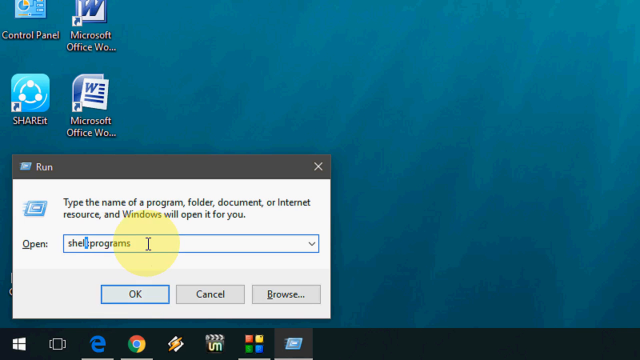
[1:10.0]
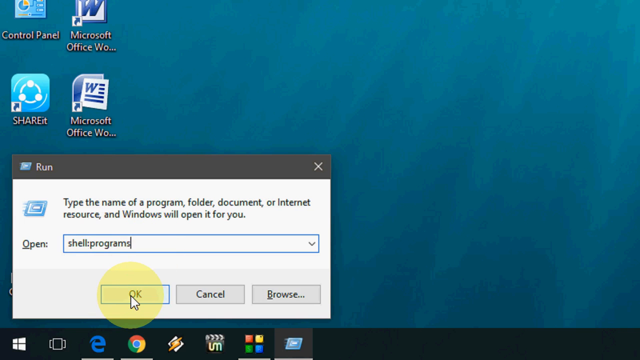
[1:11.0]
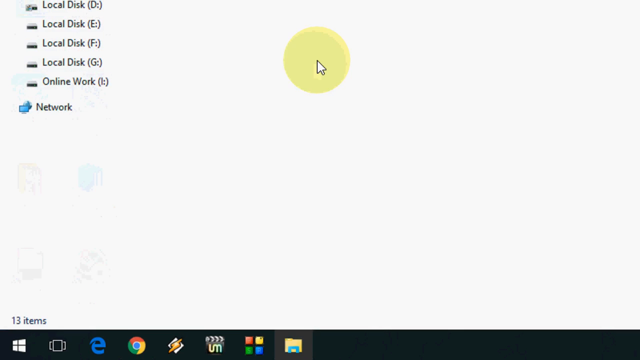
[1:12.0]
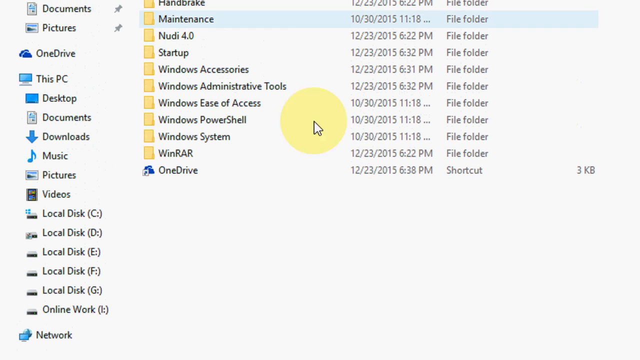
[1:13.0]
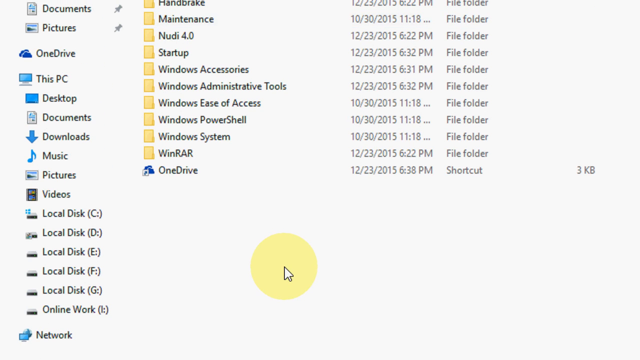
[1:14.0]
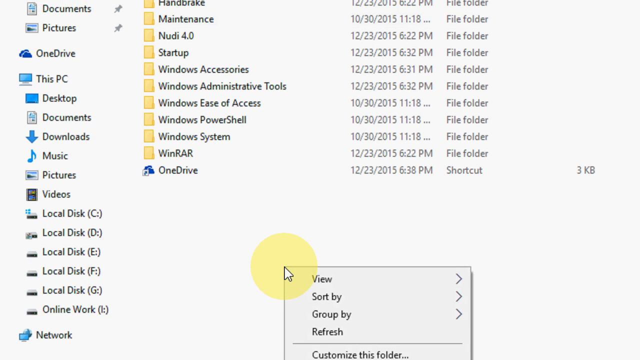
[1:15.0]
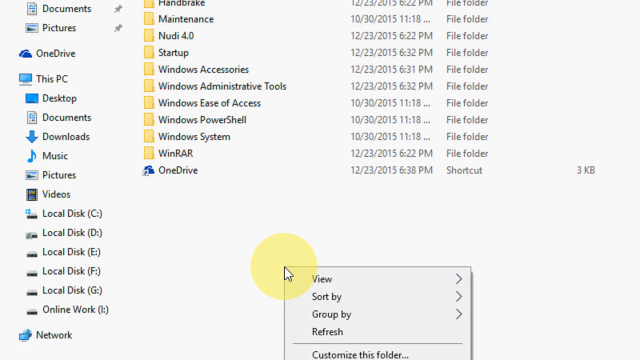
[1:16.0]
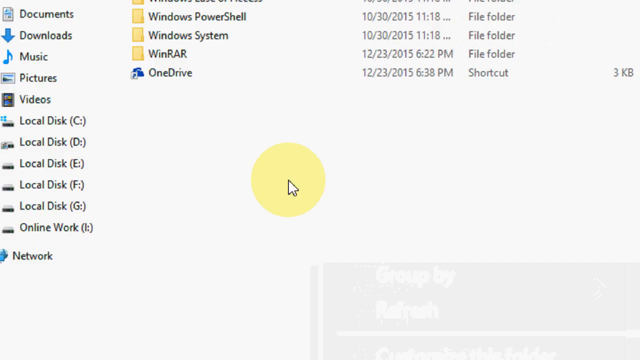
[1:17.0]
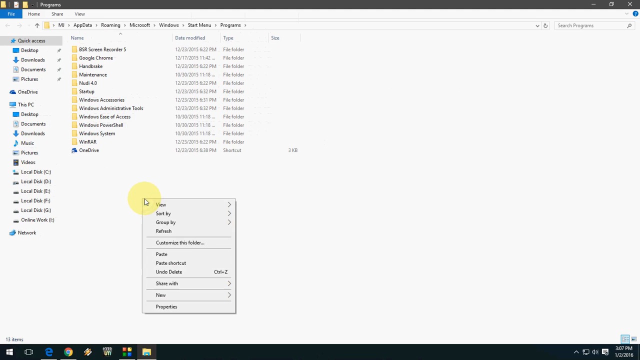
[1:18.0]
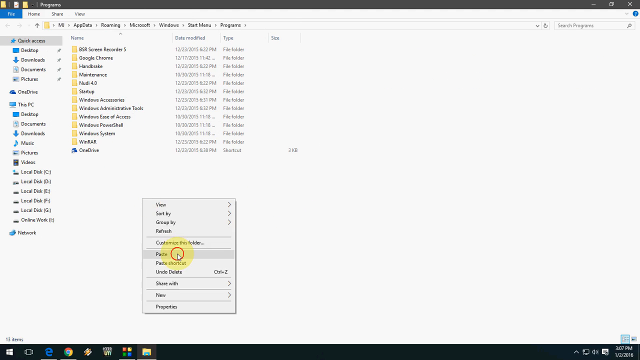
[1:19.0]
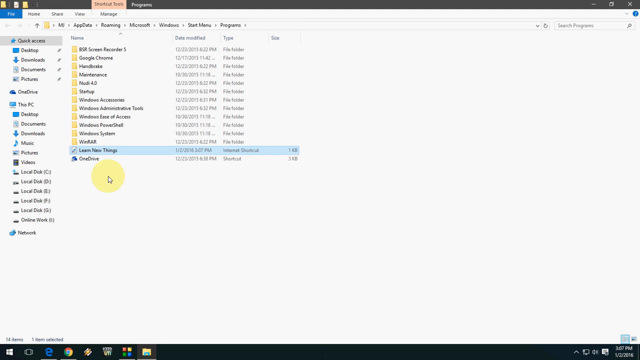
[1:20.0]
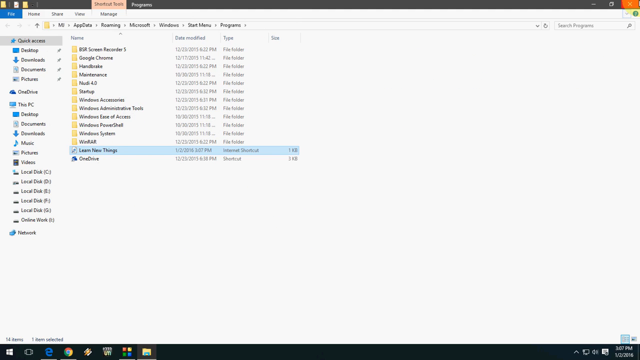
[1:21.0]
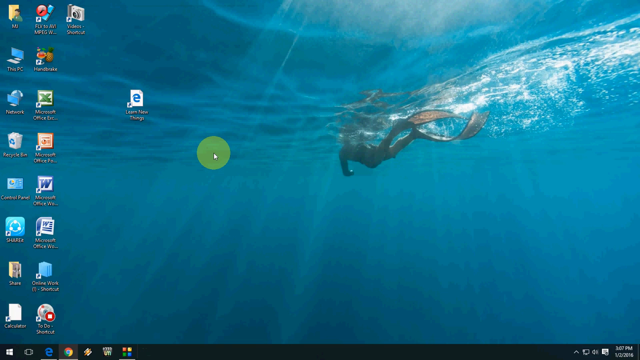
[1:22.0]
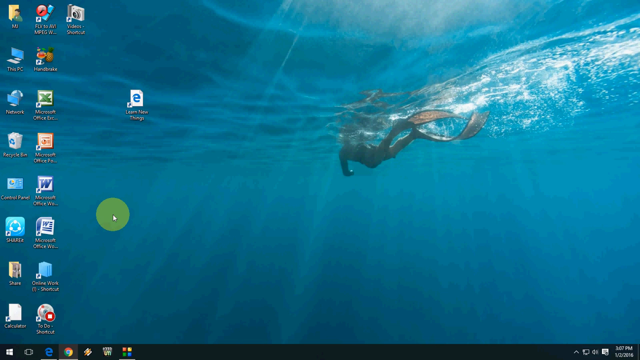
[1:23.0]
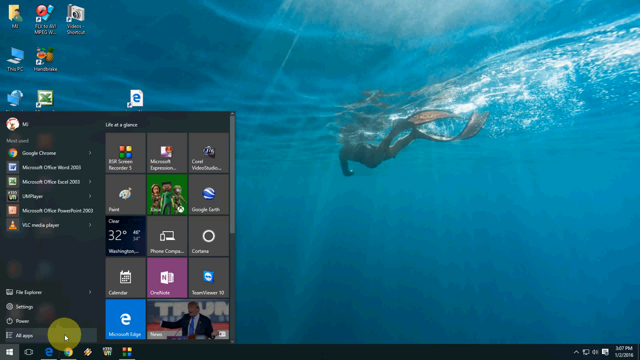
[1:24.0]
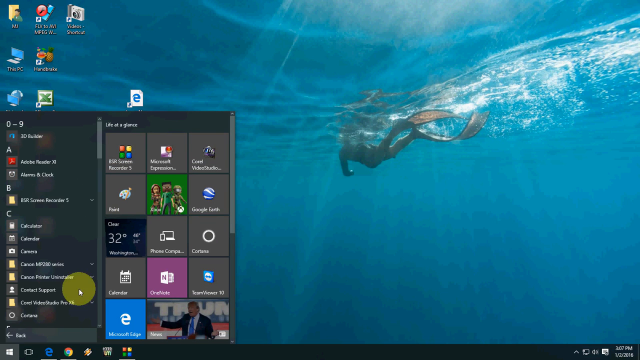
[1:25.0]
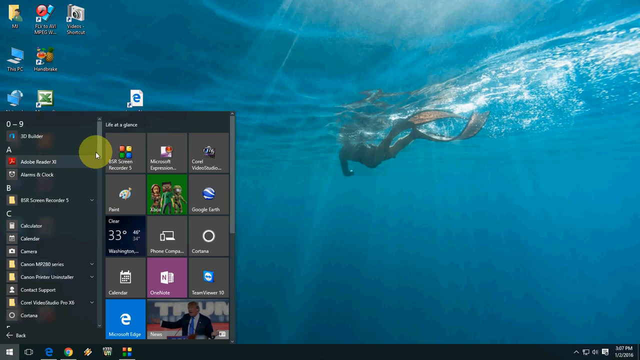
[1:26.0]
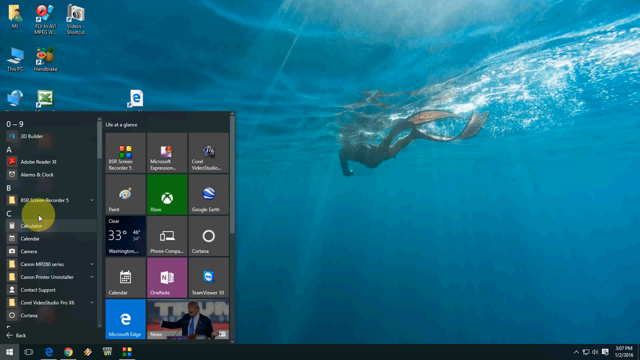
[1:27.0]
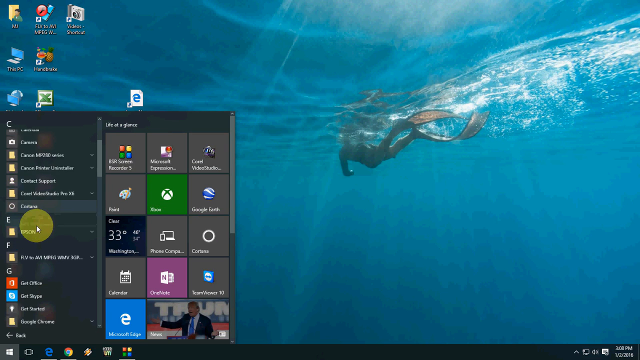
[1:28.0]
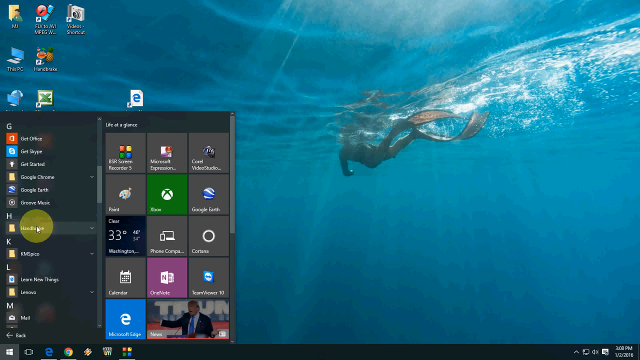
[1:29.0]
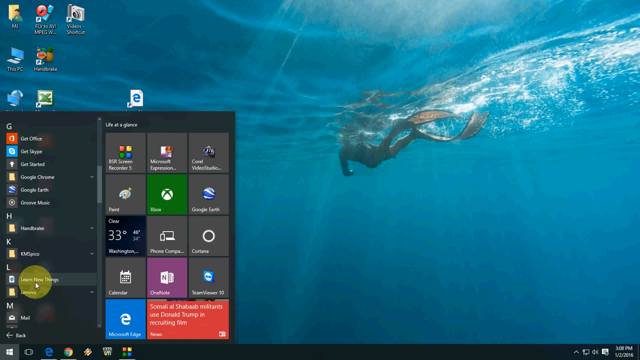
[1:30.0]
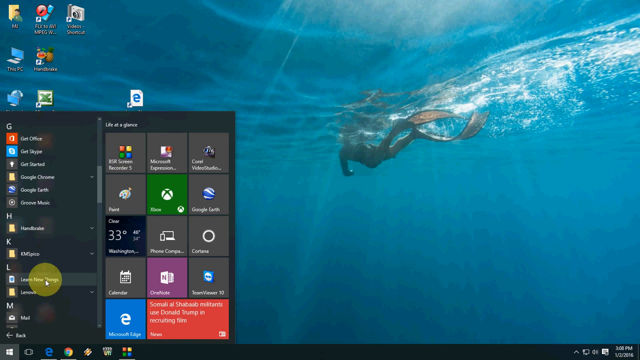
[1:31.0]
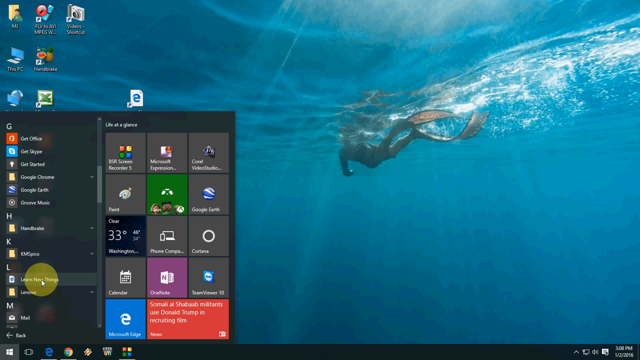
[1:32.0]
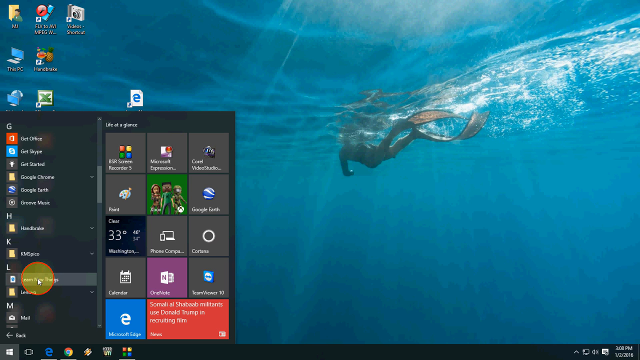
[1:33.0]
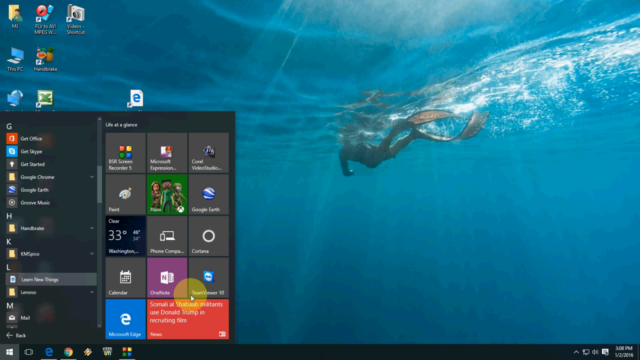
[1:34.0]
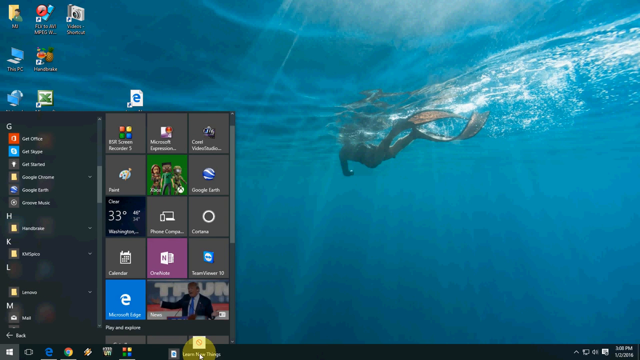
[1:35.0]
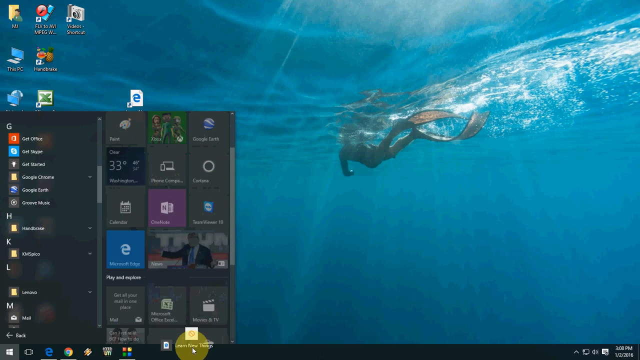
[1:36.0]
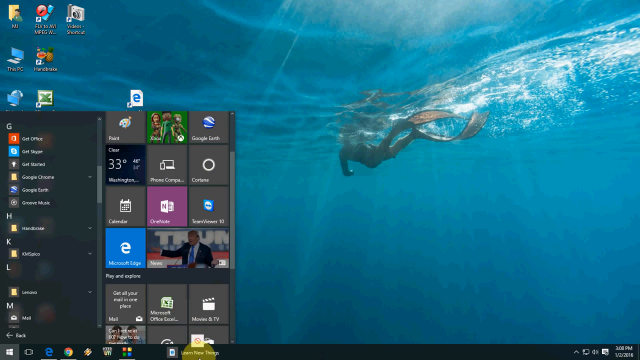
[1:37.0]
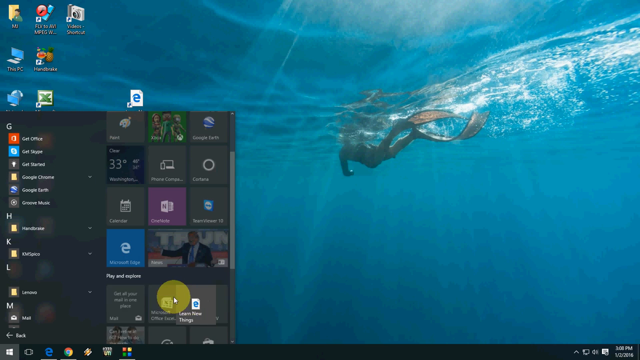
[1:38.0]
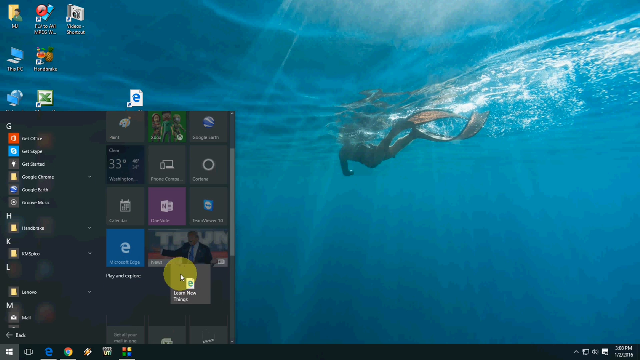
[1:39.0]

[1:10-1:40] The command "shell:programs" is run and the user clicks OK. A File Explorer window opens, showing disk drives on the left including C, D, E, F and G, along with common Windows files and folders such as Startup, Windows PowerShell, Windows System and OneDrive. A right-click opens a menu, the user clicks paste, and Learn New Things is copied into the File Explorer window. The Microsoft Windows menu then opens, with the mouse moving around it marked by a yellow circle. Learn New Things is now part of the Microsoft Windows menu. The user clicks it and drags it to the right, seemingly to create another shortcut within the Microsoft Windows toolbar. The "shell:programs" command then opens up and appears again.